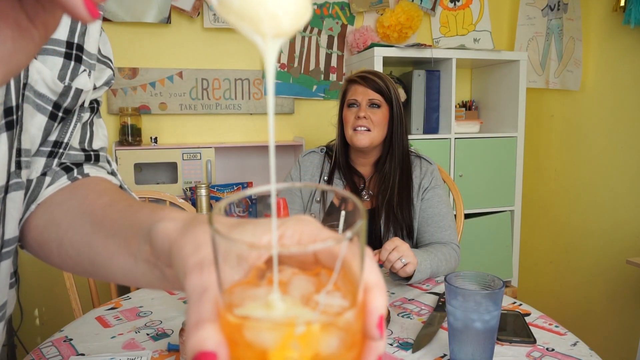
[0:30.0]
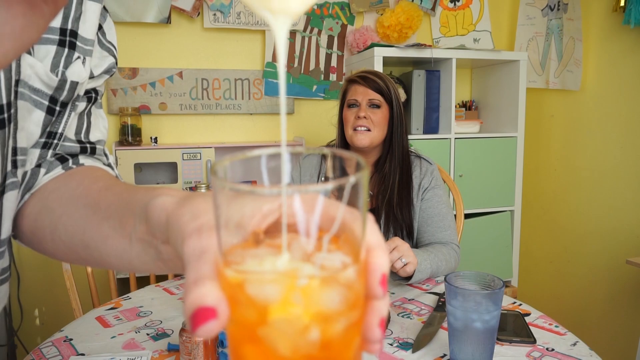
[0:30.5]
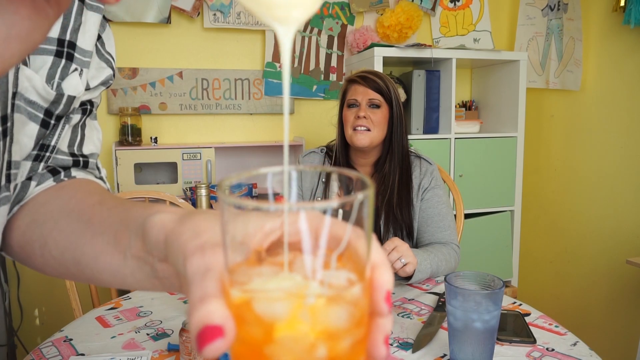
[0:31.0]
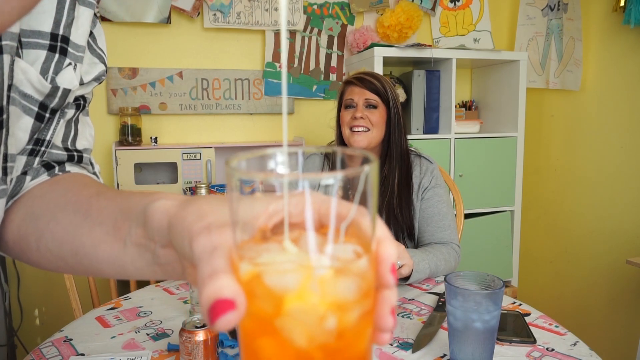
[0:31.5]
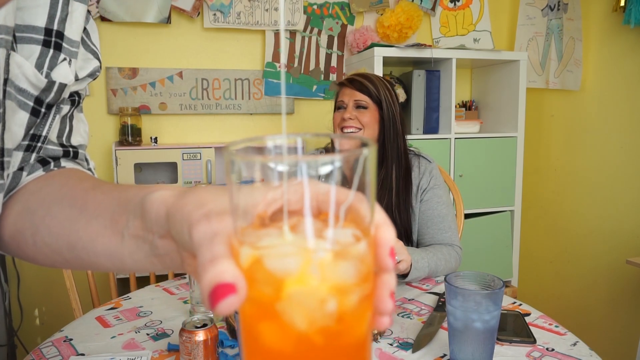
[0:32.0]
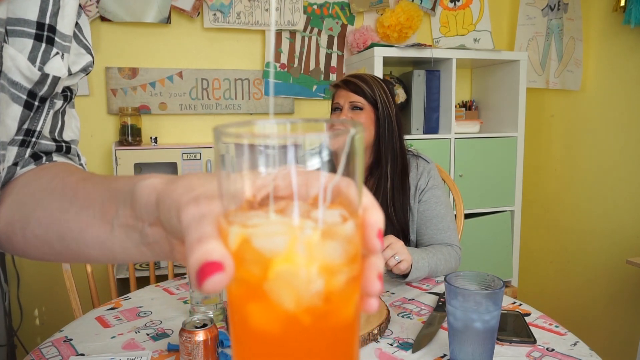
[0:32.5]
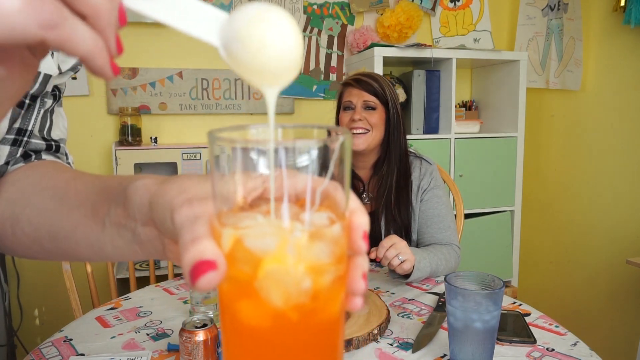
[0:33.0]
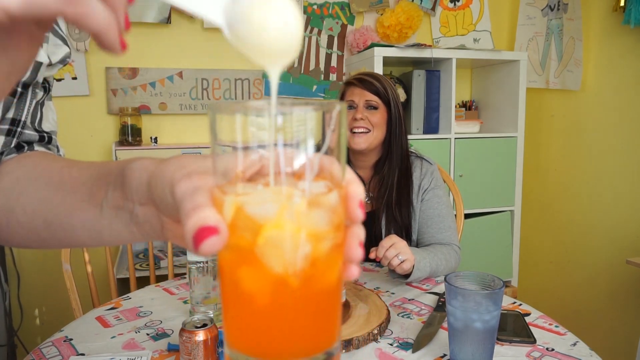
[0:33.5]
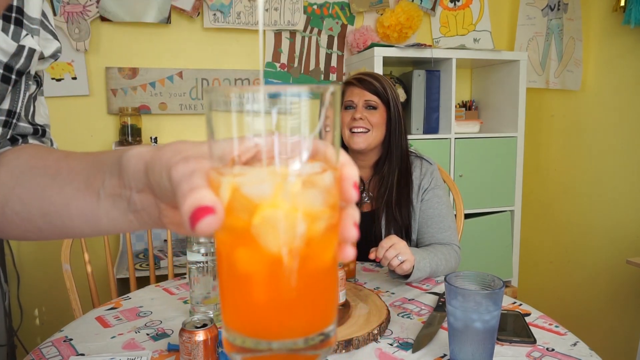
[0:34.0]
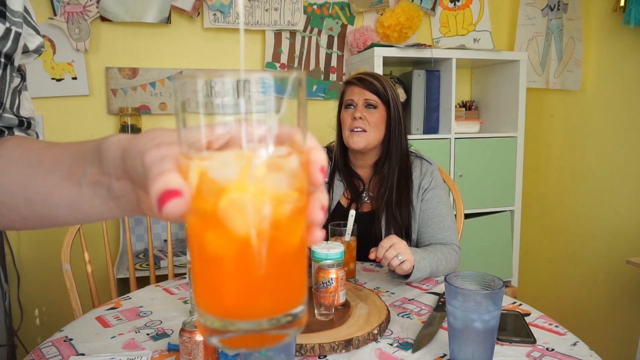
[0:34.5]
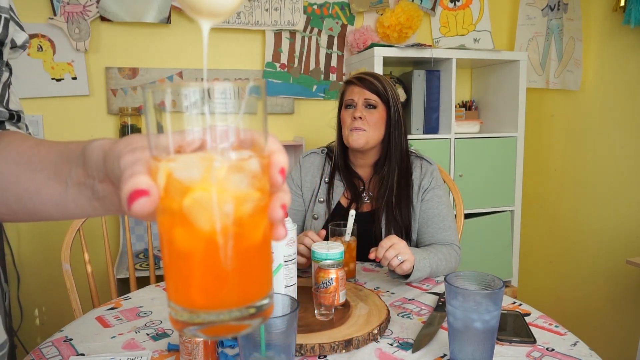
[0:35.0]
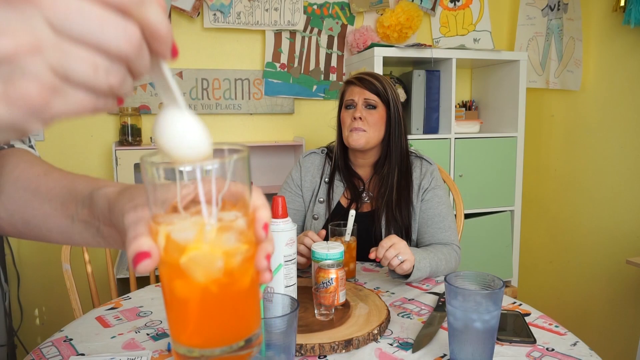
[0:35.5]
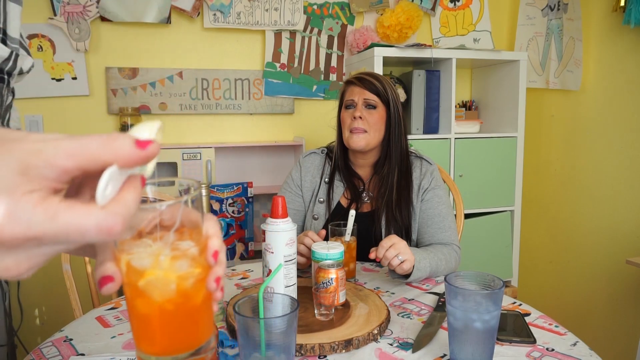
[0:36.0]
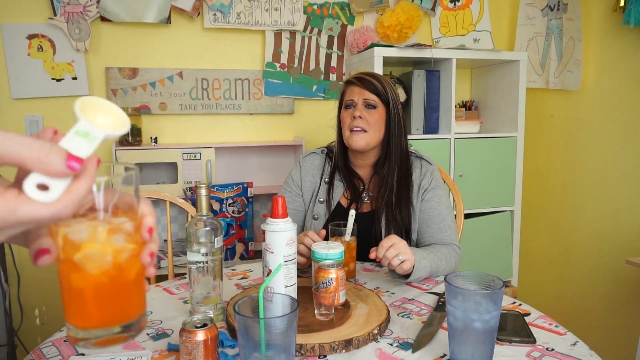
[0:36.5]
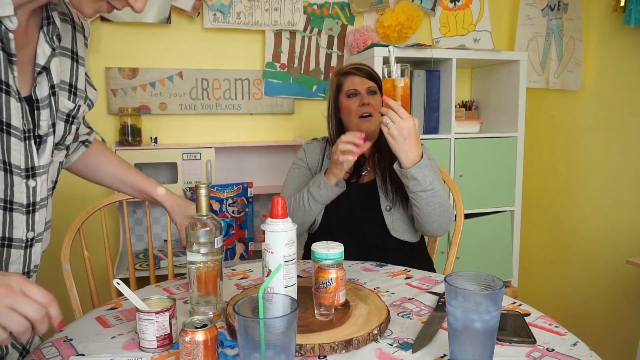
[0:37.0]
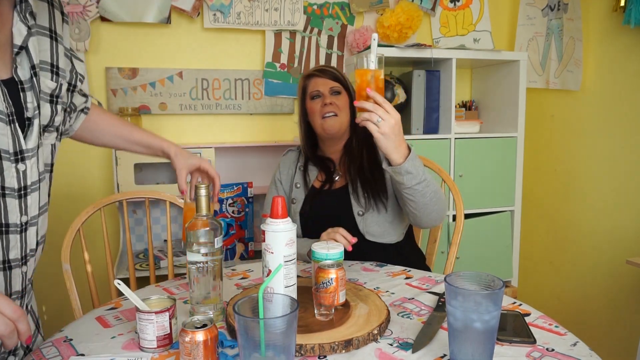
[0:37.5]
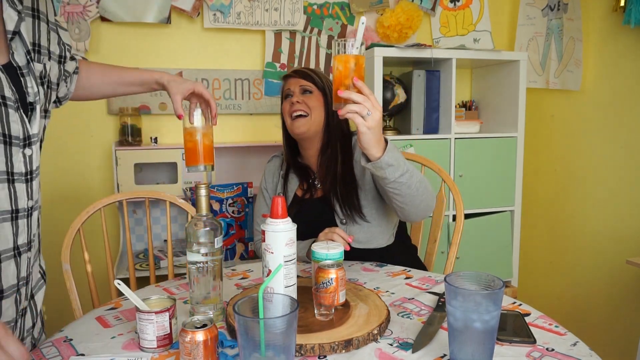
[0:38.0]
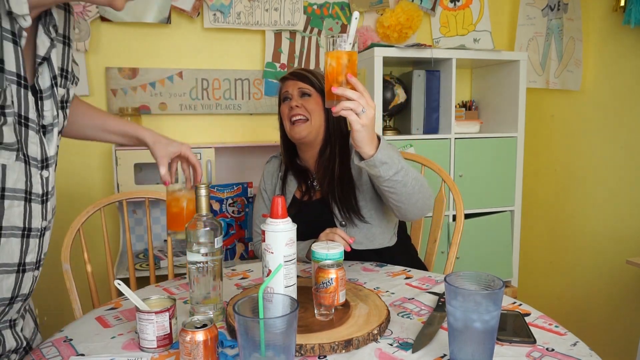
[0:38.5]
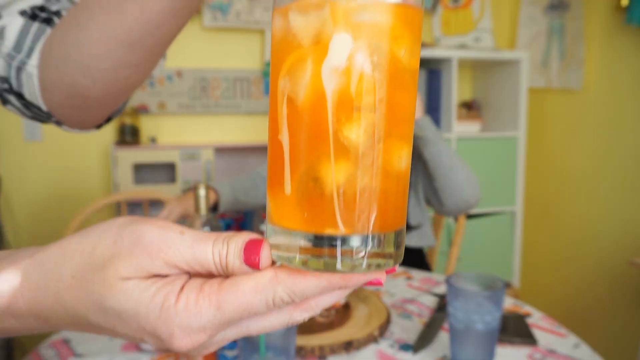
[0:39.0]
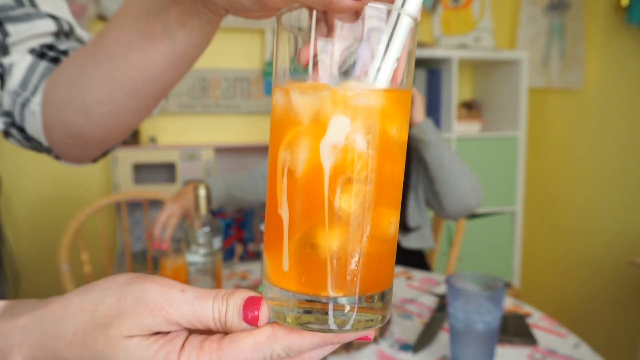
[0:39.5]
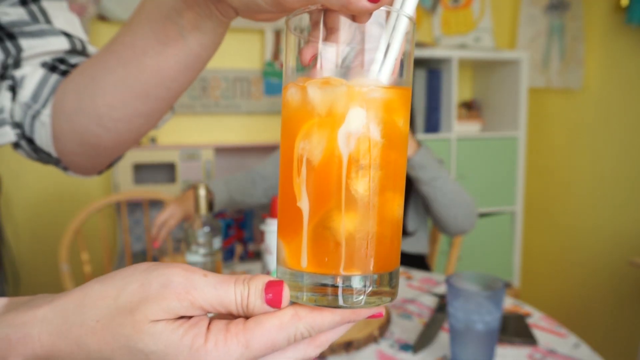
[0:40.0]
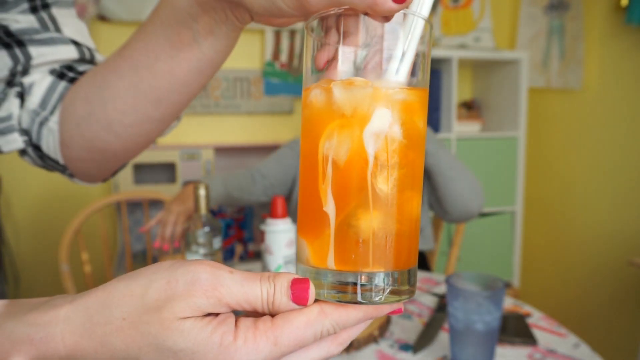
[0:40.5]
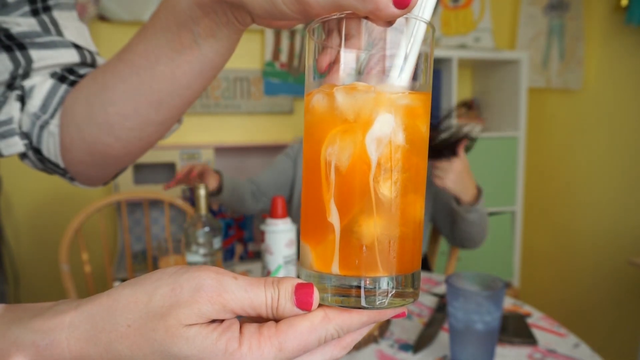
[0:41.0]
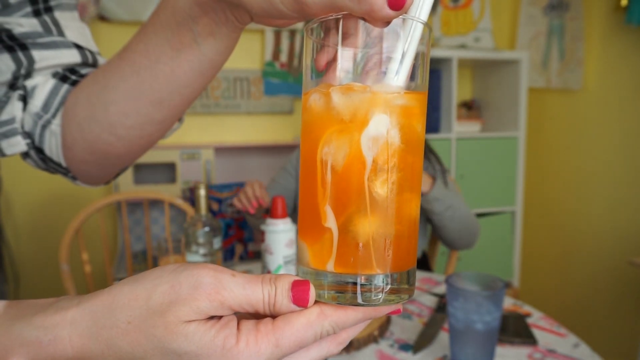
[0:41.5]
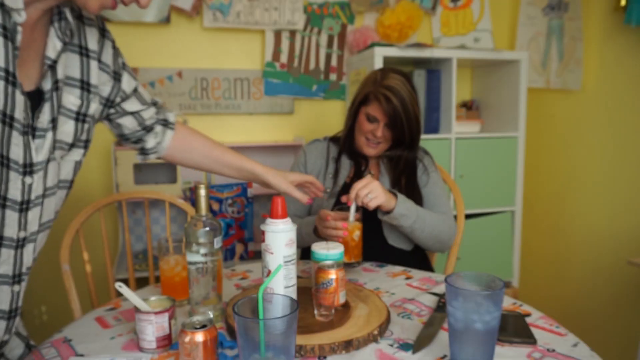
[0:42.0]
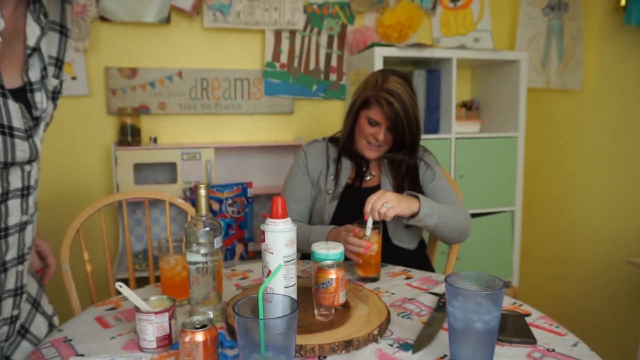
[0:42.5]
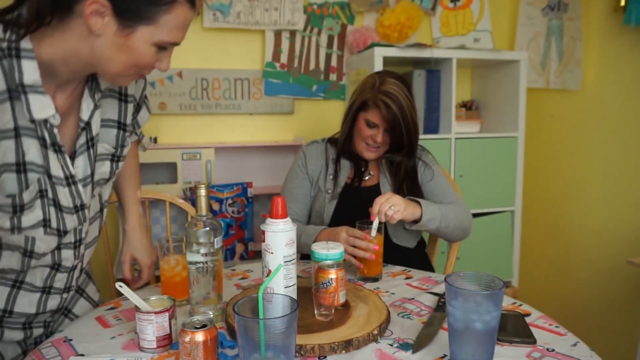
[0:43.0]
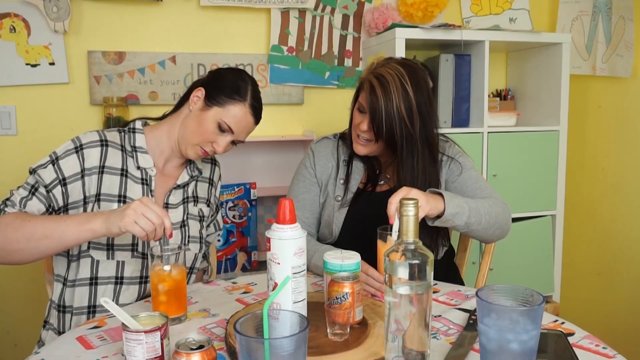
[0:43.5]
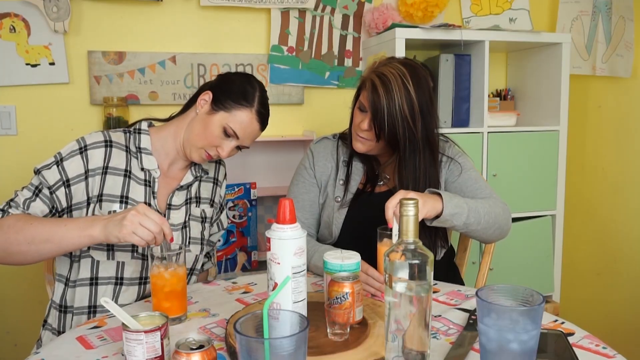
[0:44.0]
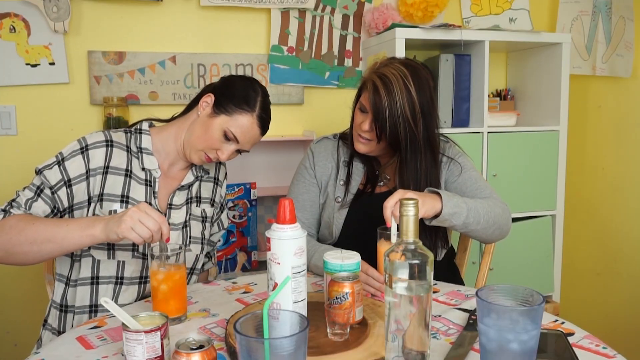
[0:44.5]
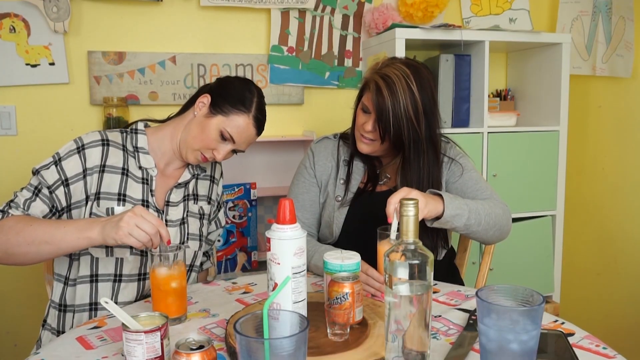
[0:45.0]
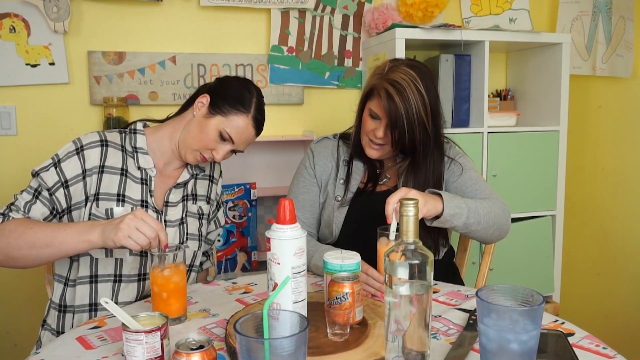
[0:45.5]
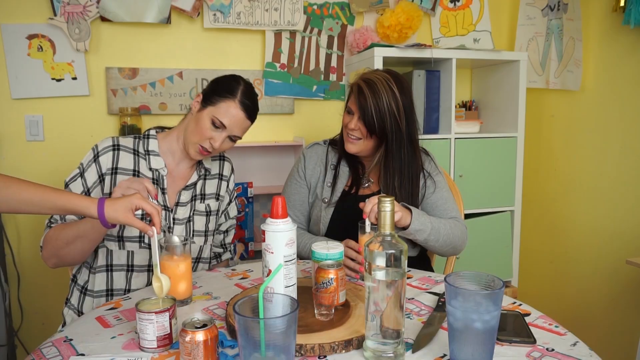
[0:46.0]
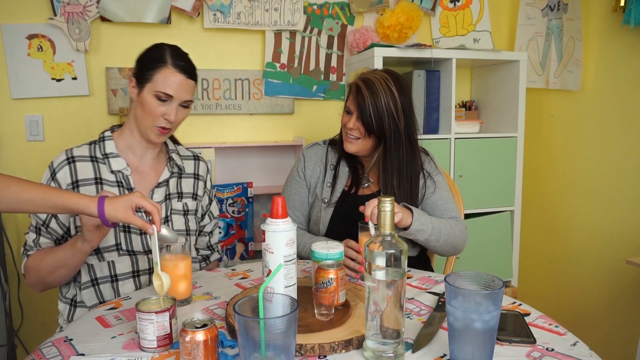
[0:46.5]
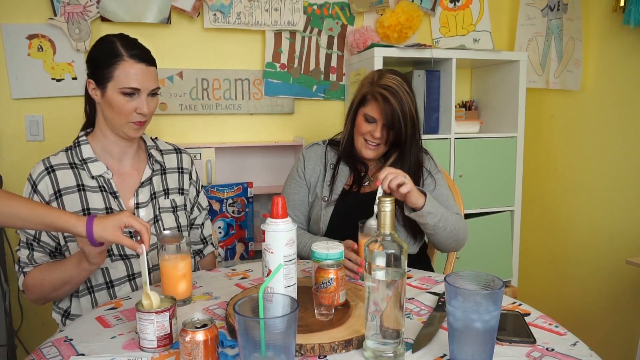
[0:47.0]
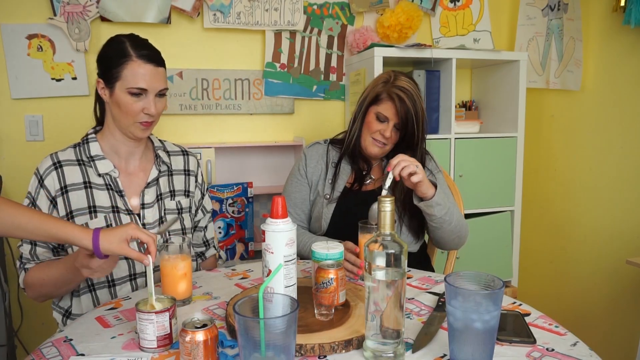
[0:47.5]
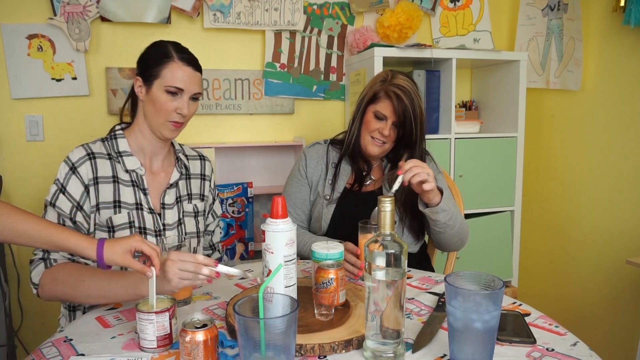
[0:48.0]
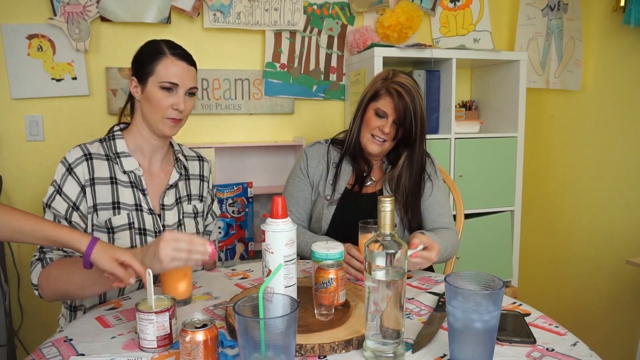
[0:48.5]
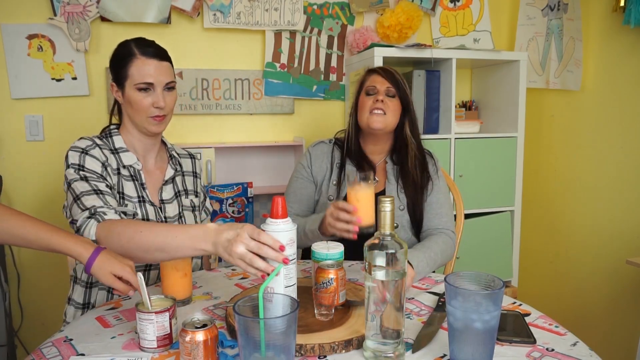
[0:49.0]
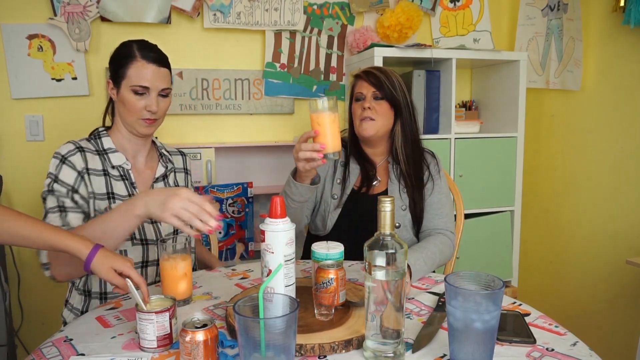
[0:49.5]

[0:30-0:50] A liquid appears to be poured into the glass of vodka and soda; it is very thick and white, possibly cake batter or cake frosting. The woman on the left does the pouring, while the woman in the back, sitting in a chair, appears somewhat disgusted or confused, seeming not to trust the process and seeming somewhat concerned about how it will taste. She laughs as the woman on the left finishes pouring, and the cup containing the alcohol, soda, frosting and ice cubes is shown to the camera. Both women begin stirring the cups, and the orange liquid moves around in the glass. A third person then appears to hand the woman on the left some type of mixer or spoon.